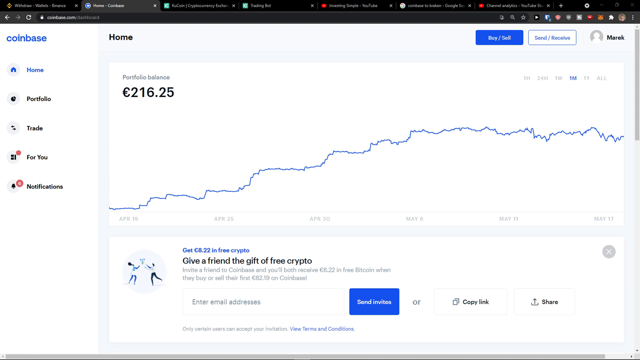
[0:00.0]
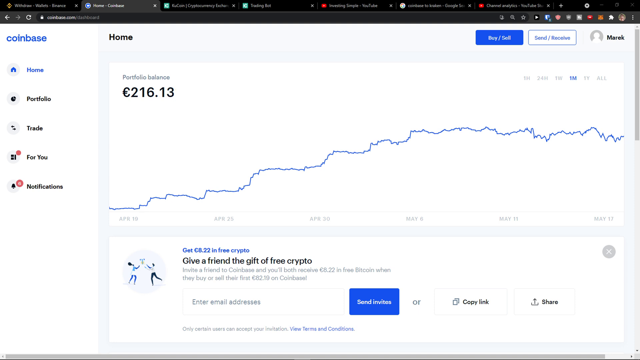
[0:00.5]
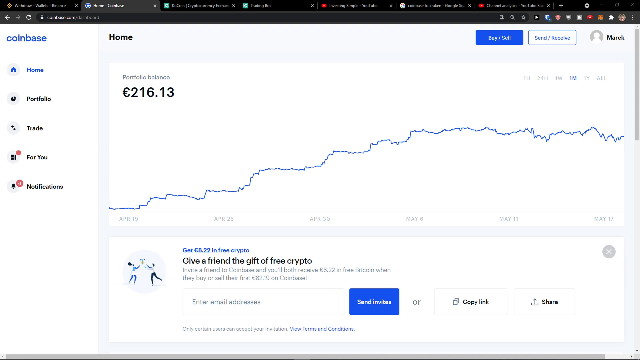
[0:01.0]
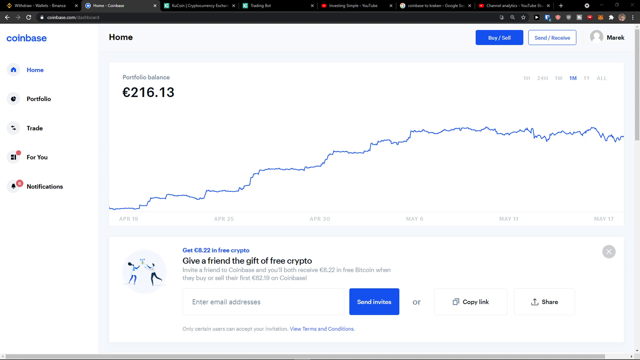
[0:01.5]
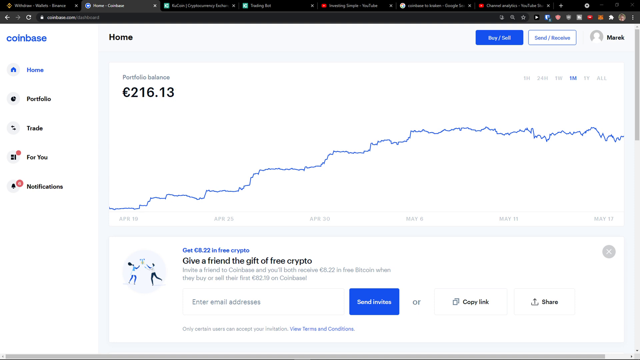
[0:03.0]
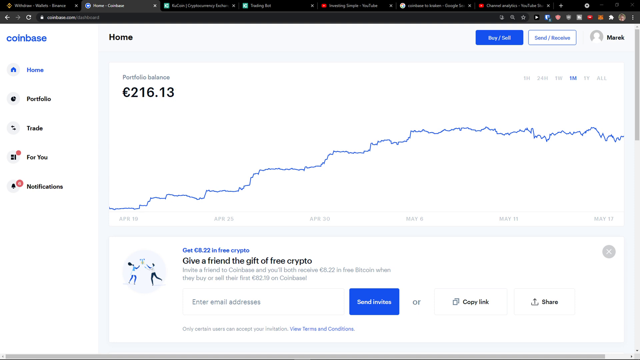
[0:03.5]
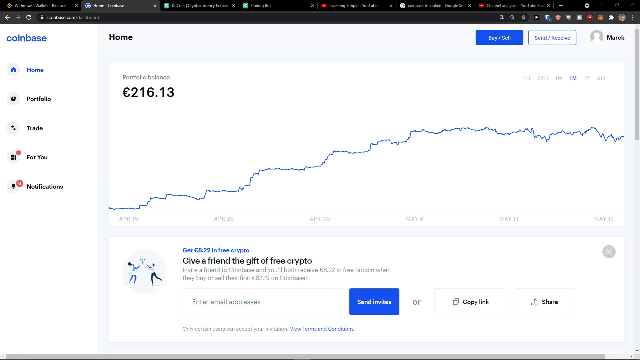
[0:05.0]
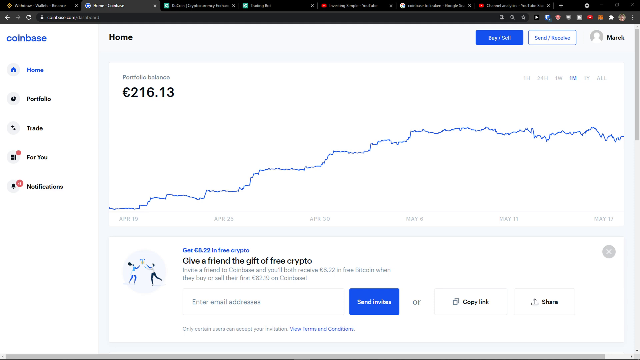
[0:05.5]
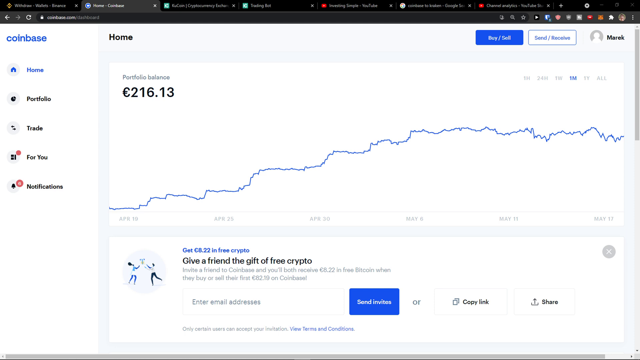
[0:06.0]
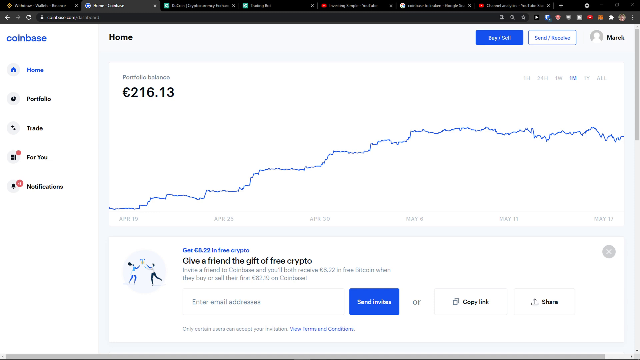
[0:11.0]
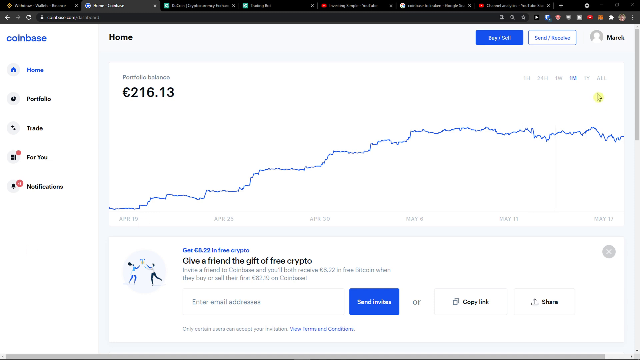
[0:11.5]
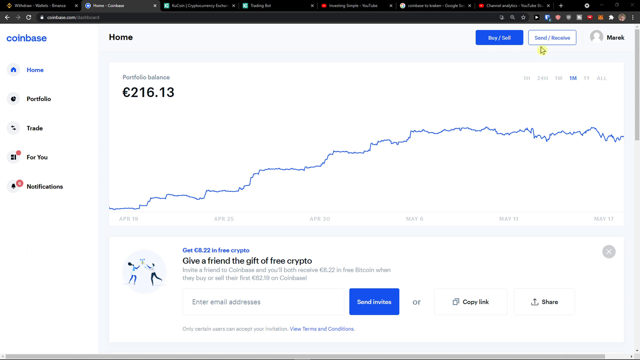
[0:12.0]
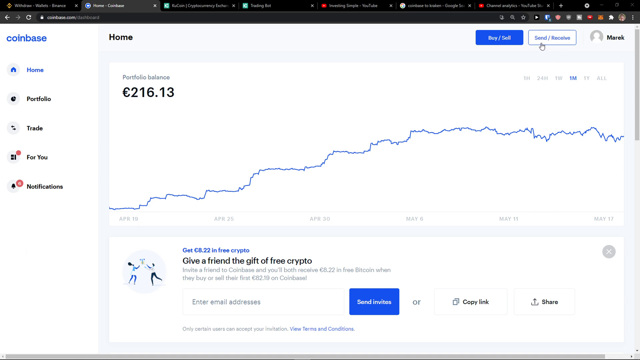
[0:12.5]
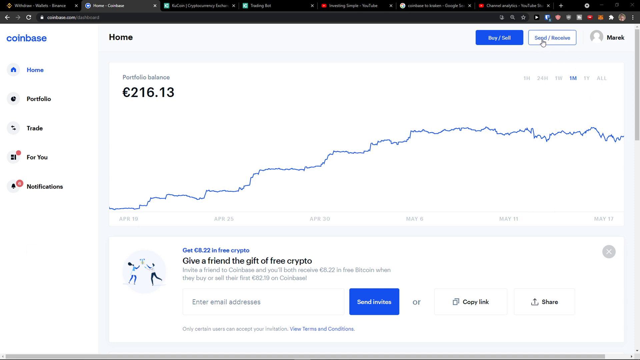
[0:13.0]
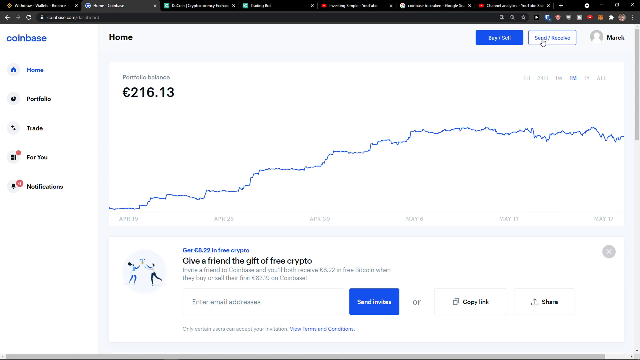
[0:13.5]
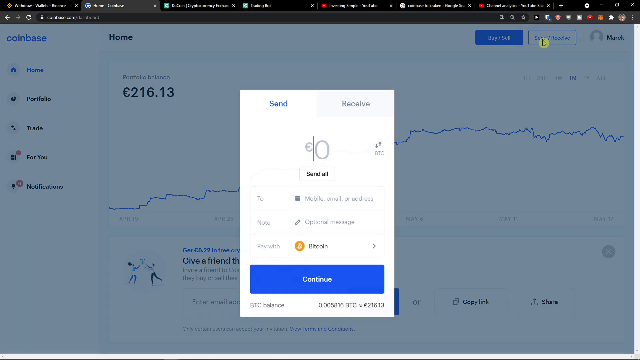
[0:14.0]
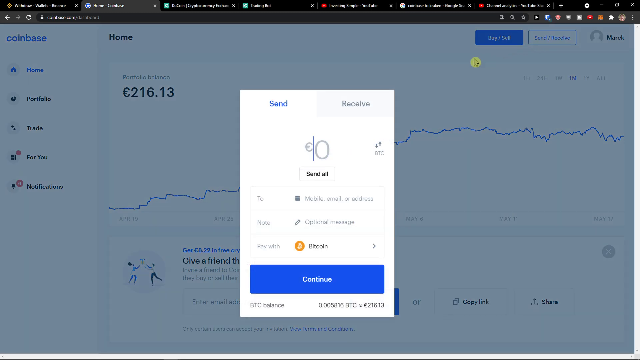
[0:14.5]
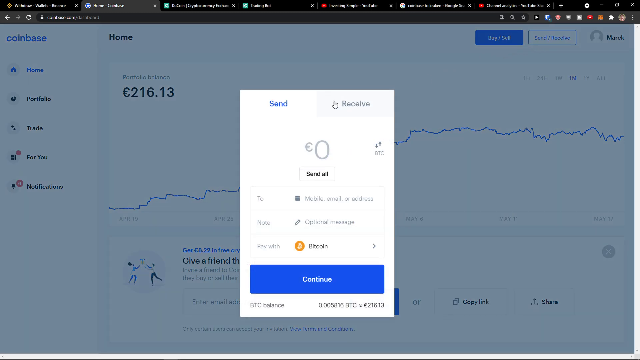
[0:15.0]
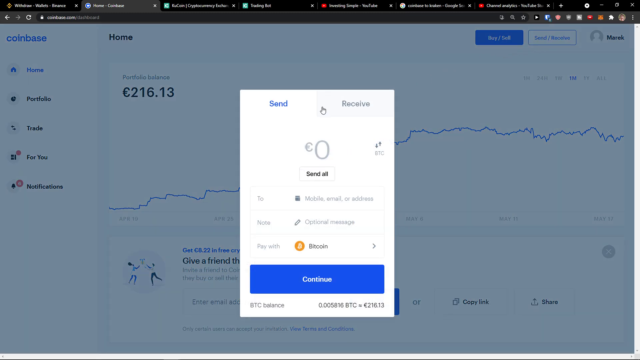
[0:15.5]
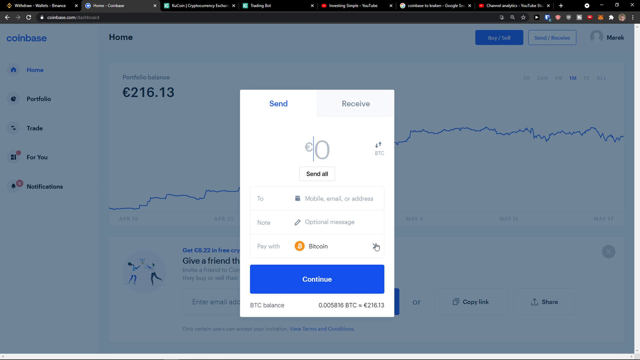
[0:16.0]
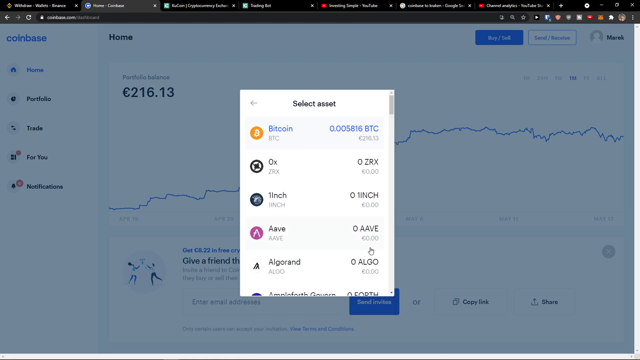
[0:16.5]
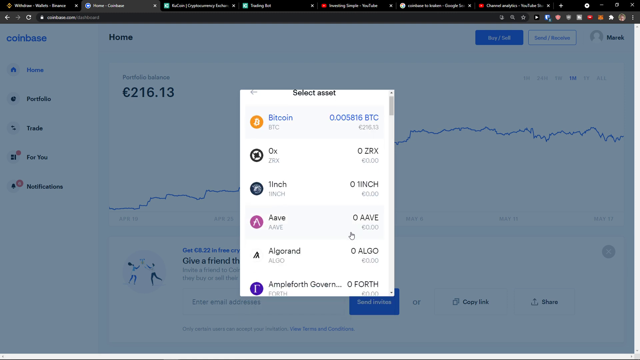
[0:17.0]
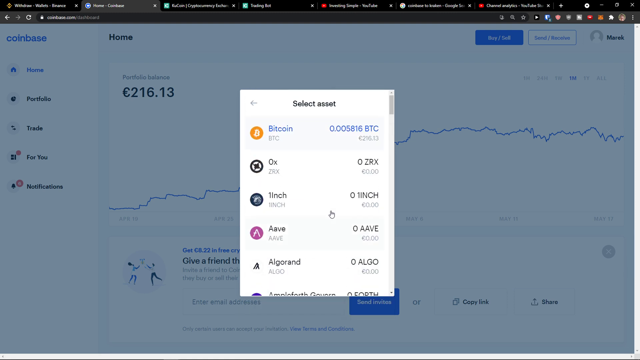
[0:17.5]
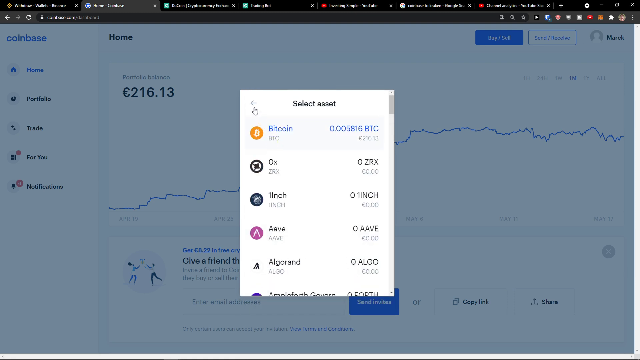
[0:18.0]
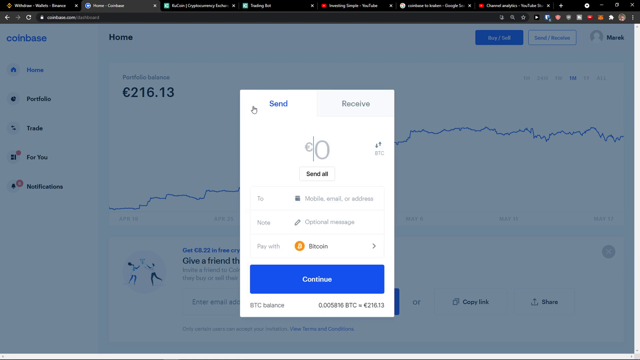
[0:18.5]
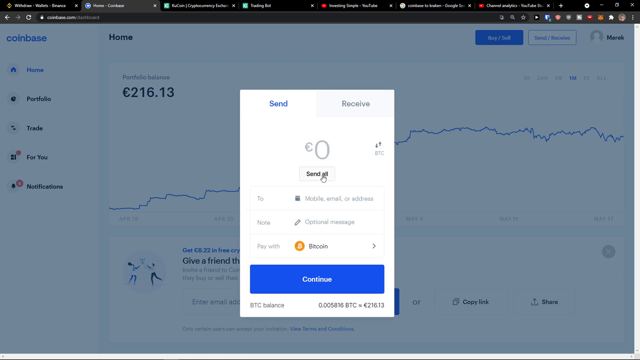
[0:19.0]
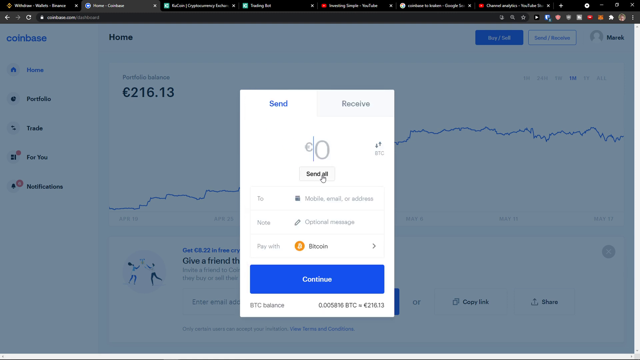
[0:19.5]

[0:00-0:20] A screenshot of some type of graph appears, with "Coinbase" in the top left; it possibly shows the growth of something over time. In the main area there is a symbol, apparently for European money, followed by "216.13", and the graph is blue and appears to go up over time. At first the screen is completely still. Then a mouse cursor moves, turns into a hand, and points up toward the top at what appears to be a button that says "Send Receive". The button is clicked, and a small window or panel appears in the middle of the screen with "Send" and then "Receive" at the top. The mouse moves, and the panel is scrolled down.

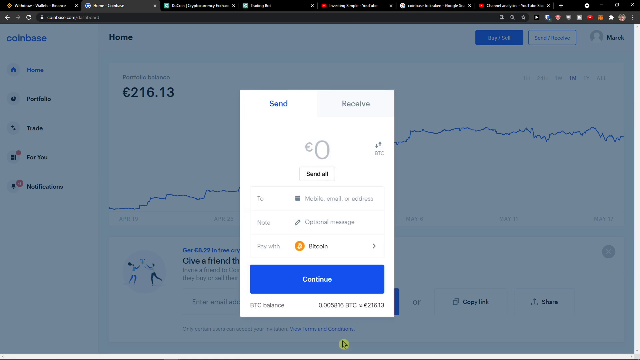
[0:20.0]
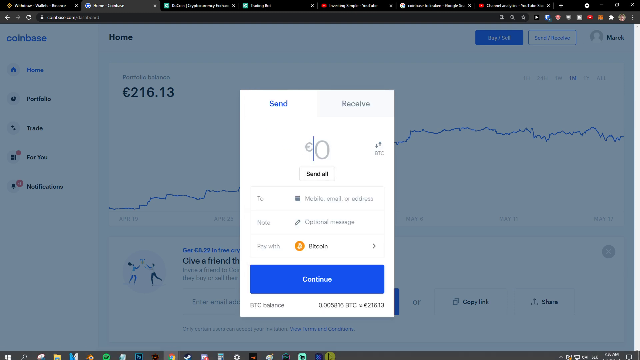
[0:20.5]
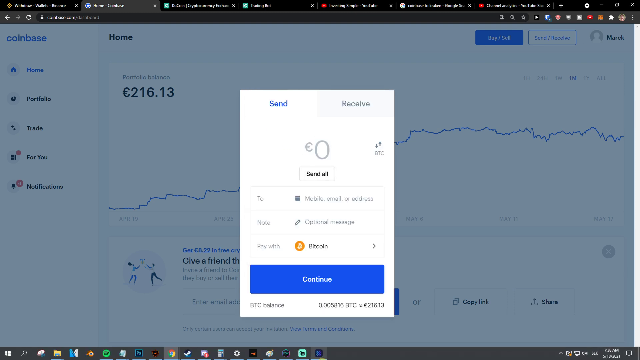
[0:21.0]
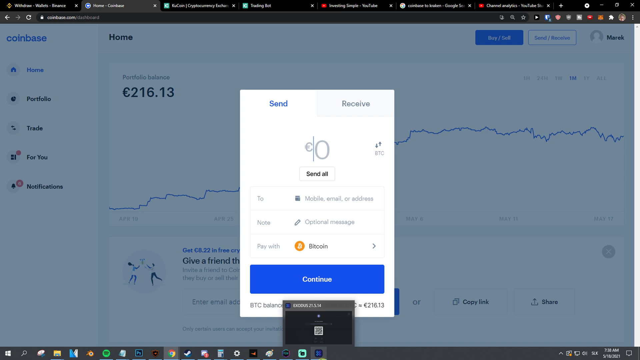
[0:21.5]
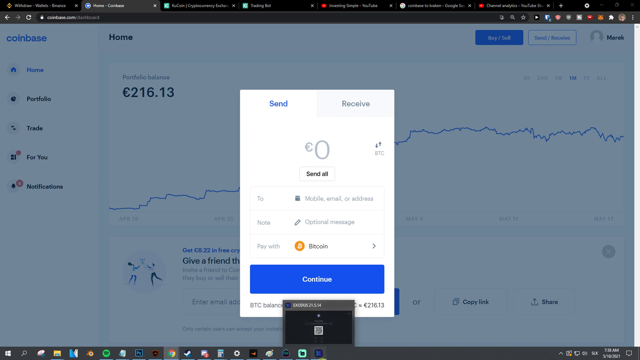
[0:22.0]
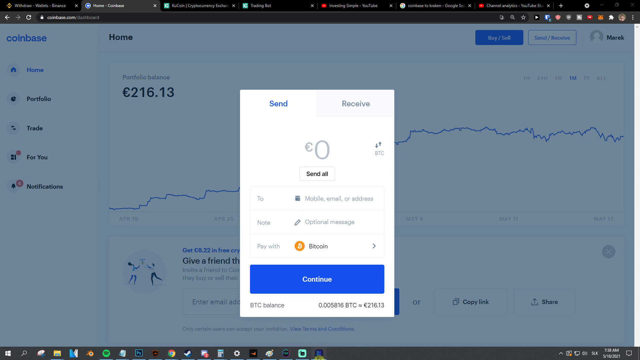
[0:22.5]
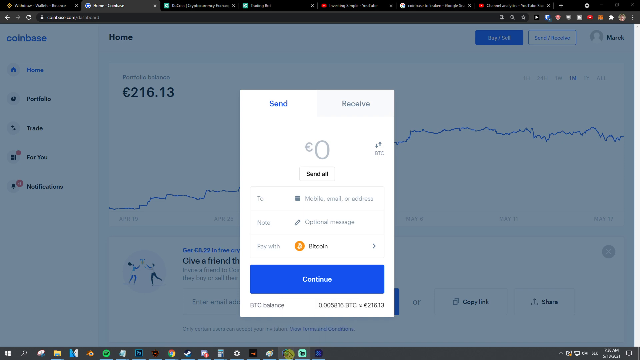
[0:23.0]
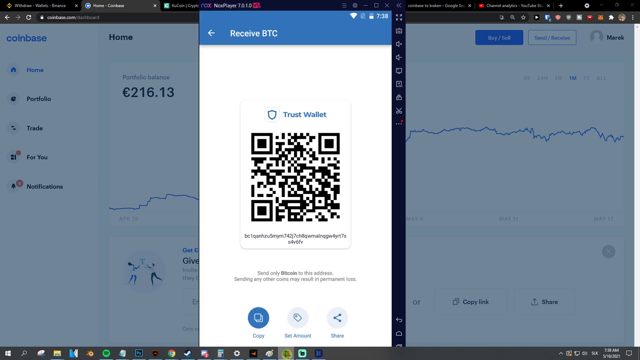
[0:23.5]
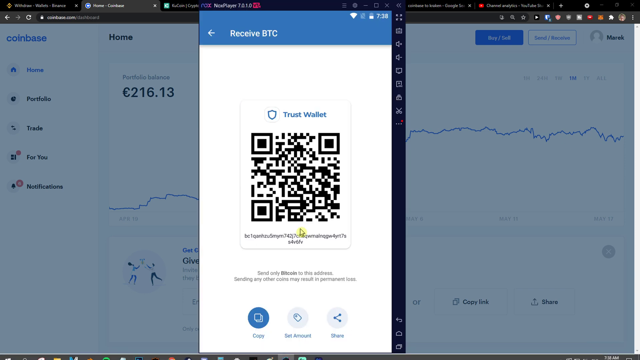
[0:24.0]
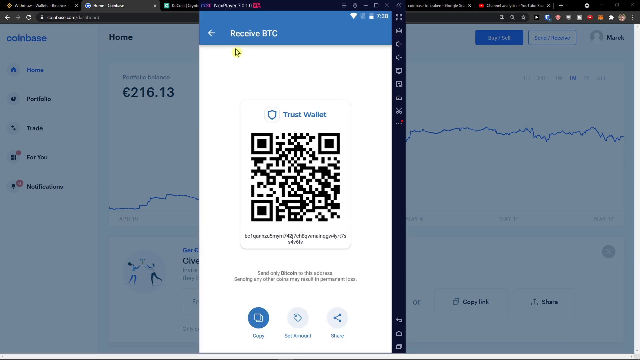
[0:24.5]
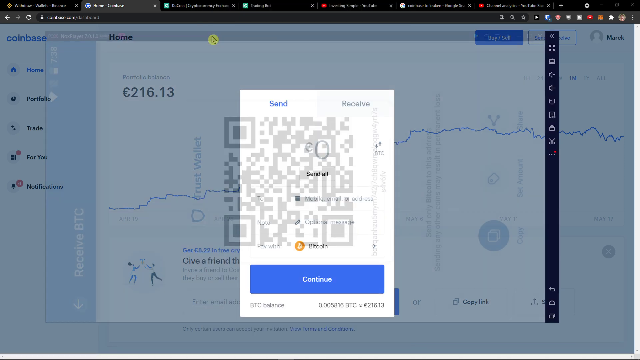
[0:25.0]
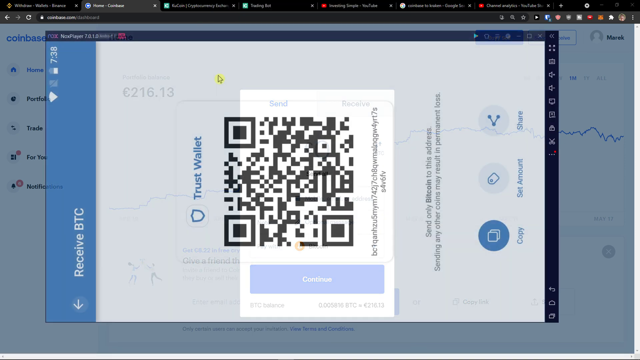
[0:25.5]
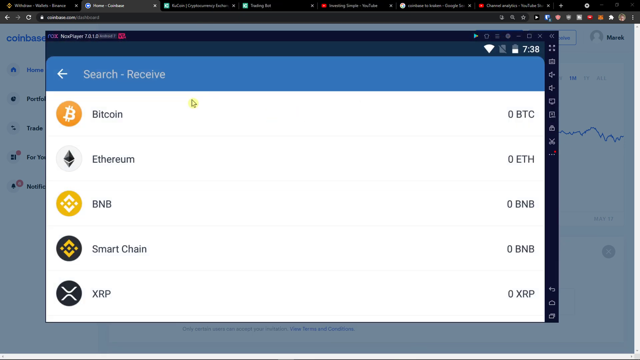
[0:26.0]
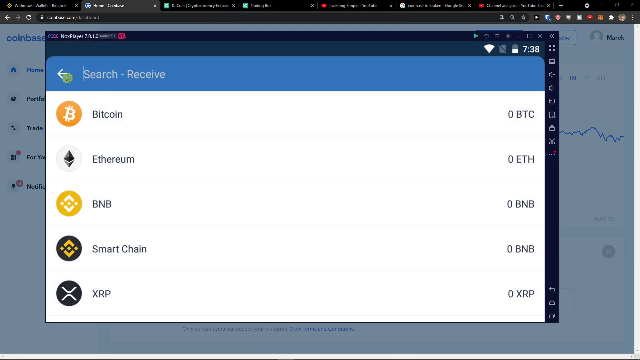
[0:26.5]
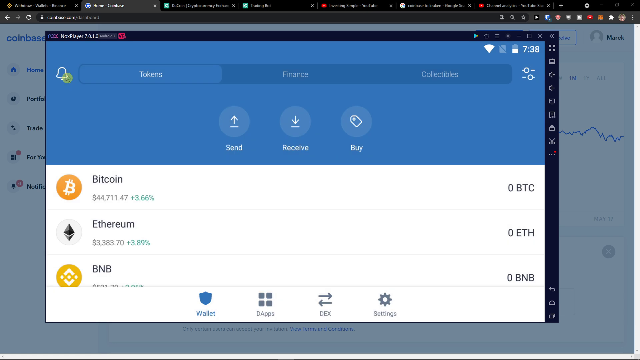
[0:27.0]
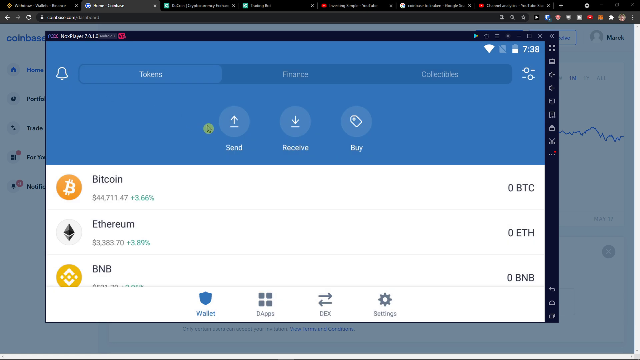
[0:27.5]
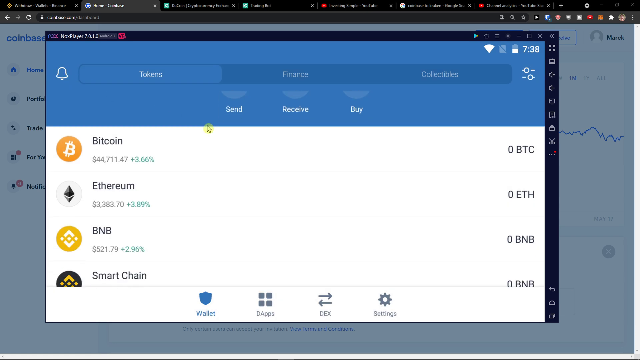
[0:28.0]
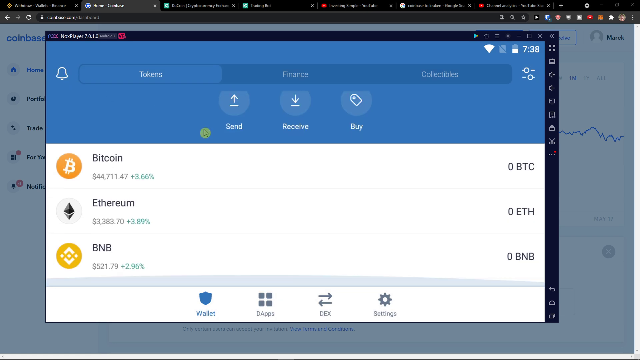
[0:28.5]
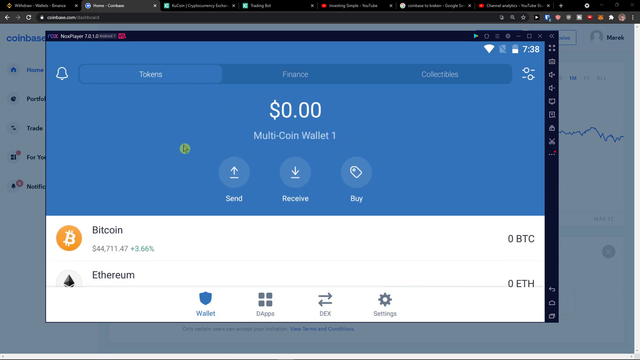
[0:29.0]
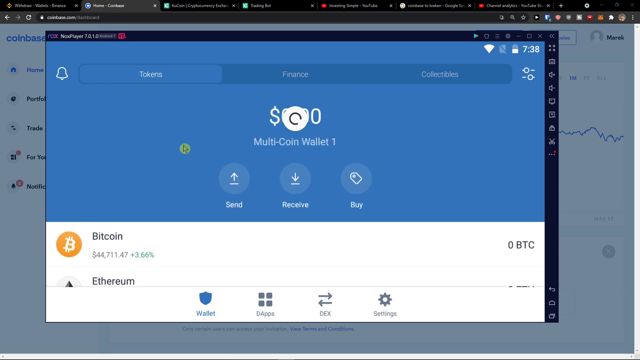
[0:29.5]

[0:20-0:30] A website is on screen with "Coinbase" in the upper left-hand corner, grayed out with a blue tint, because a small white window is open in the middle that says "Send" and then "Receive" and is set at zero dollars. A mouse cursor moves quickly around the screen. Another window opens showing a QR code, with "Receive BTC" at the top and an arrow pointing to the left. The cursor goes over to the arrow and quickly clicks it, leading to another screen, which is scrolled up and down. Another arrow is quickly clicked, and at the very end a refresh apparently is attempted.